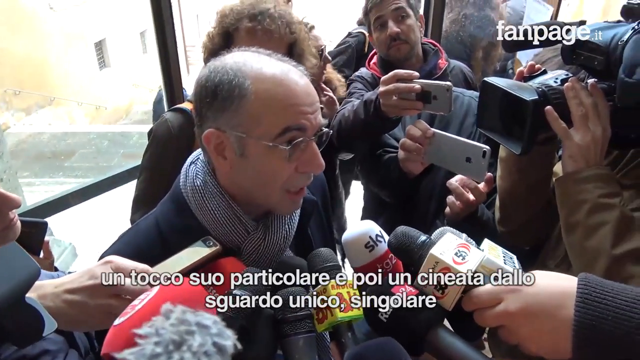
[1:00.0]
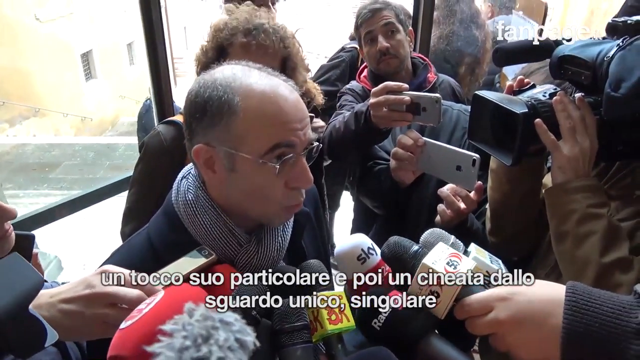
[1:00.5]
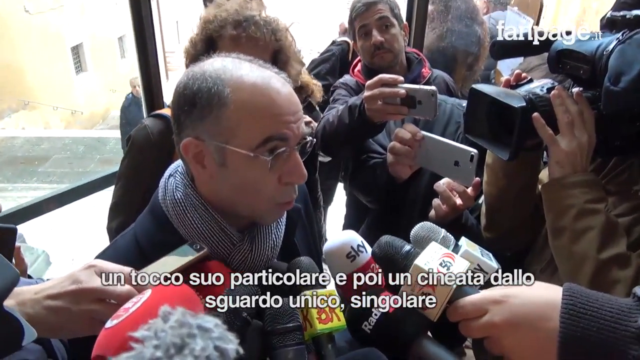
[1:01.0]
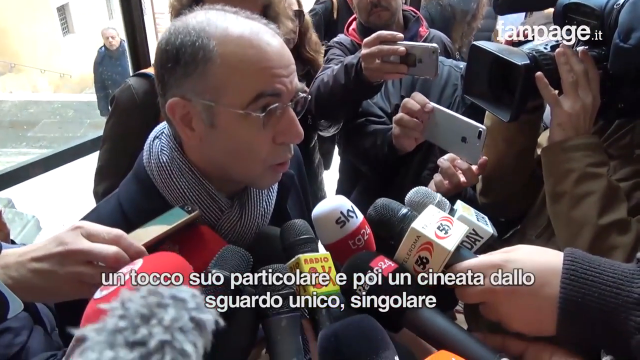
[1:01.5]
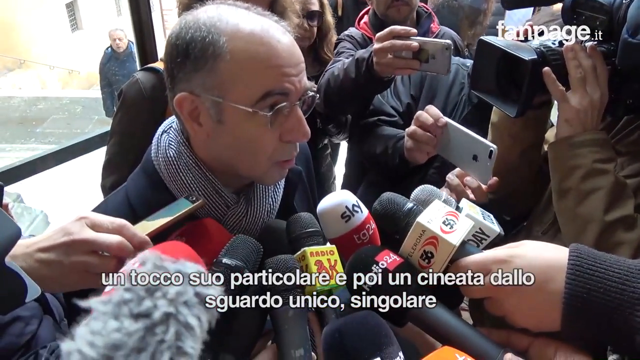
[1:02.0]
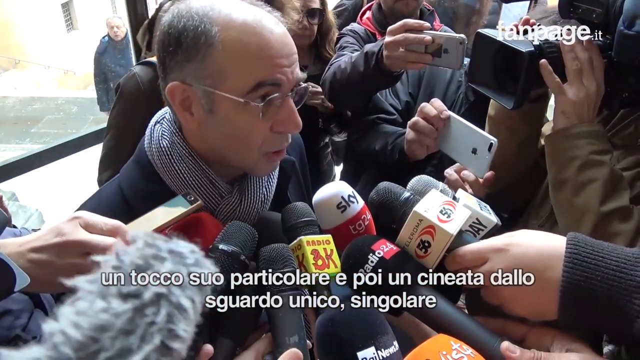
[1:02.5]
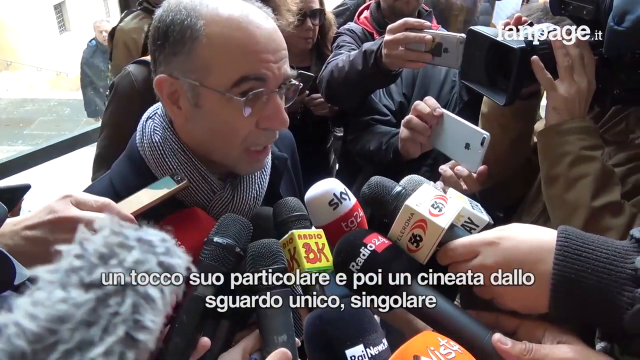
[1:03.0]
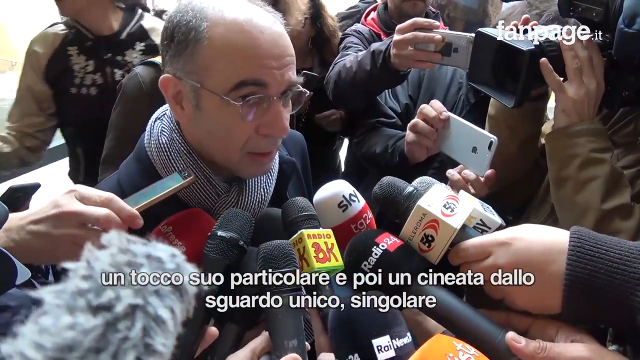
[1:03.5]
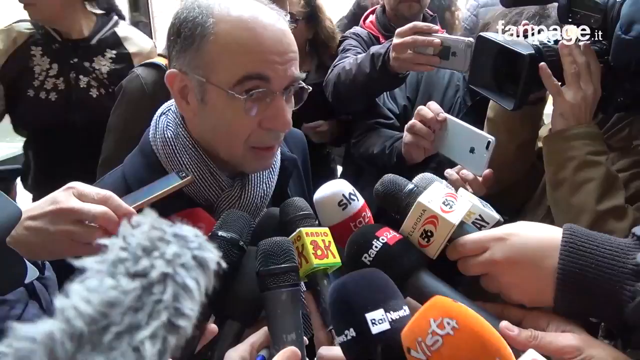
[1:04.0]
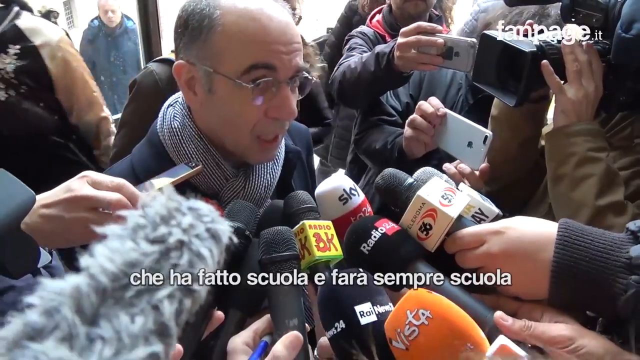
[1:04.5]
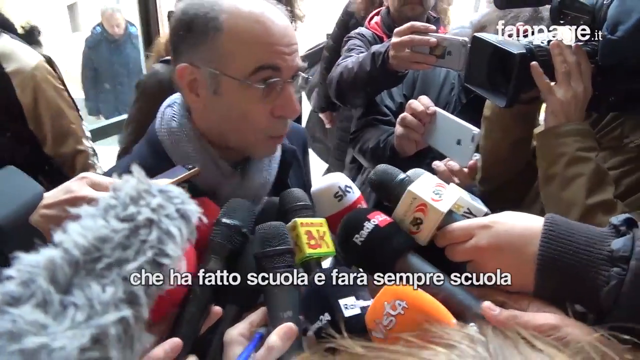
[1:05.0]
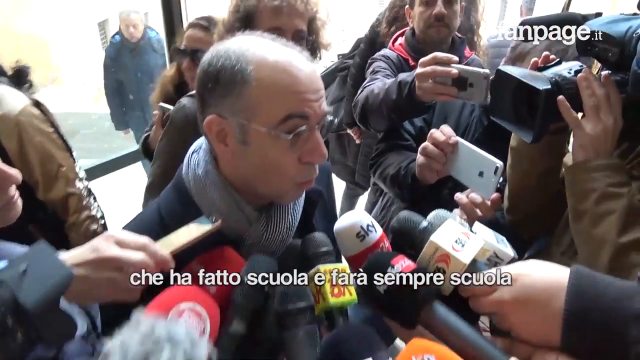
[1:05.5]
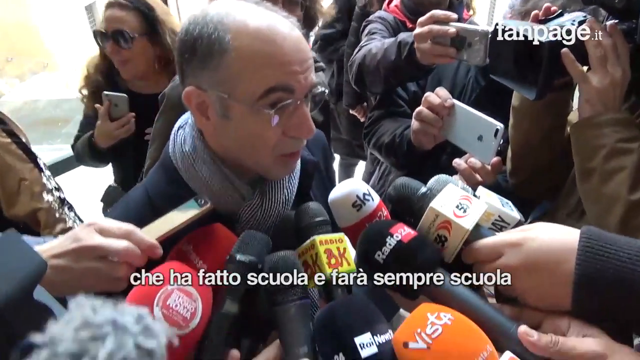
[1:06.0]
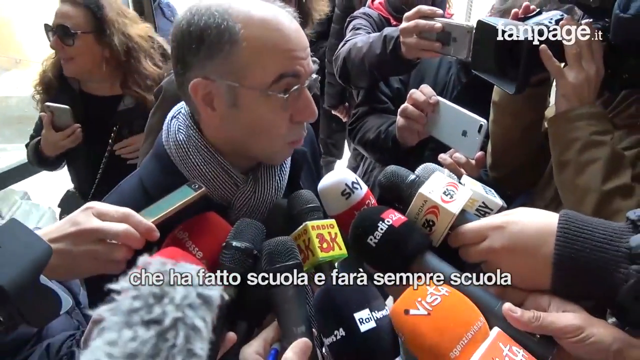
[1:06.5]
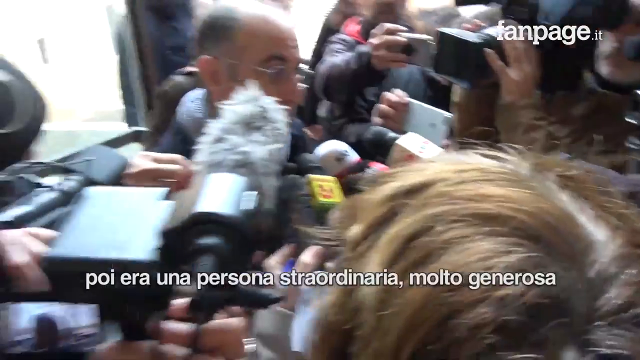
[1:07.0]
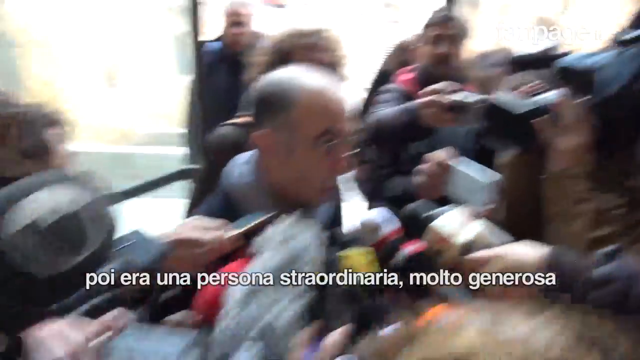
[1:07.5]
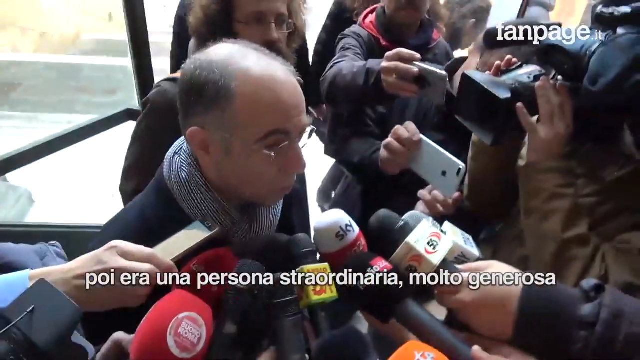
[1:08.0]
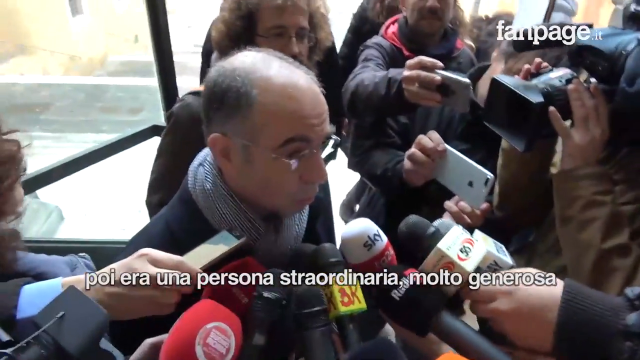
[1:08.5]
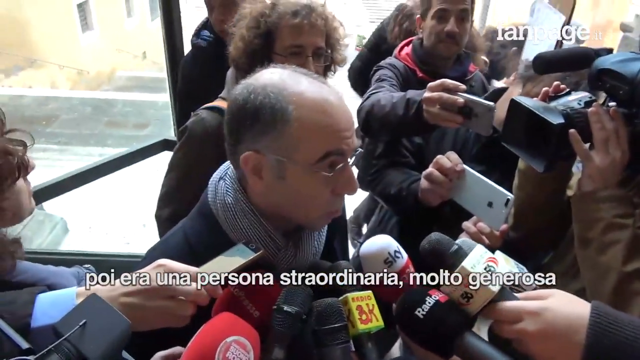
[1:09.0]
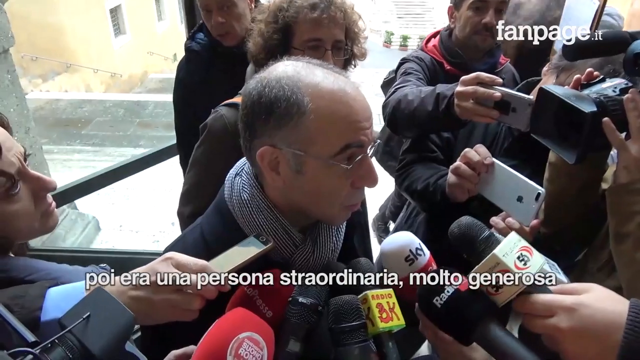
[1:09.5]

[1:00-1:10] The same man appears in the same scene. There are about 10 or 15 reporters and 10 or 15 mics, along with a mix of cell phone cameras and cell phone recorders. A cameraman on the right side of the frame films Giuseppe. He has a very calm demeanor and speaks slowly; the scene is not a frenzy, and the reporters are orderly, not pushing, waiting patiently for him to stop talking. The setting appears to be a stairwell or an upper floor, apparently the second or third floor, with glass windows in the walls through which street level is visible.